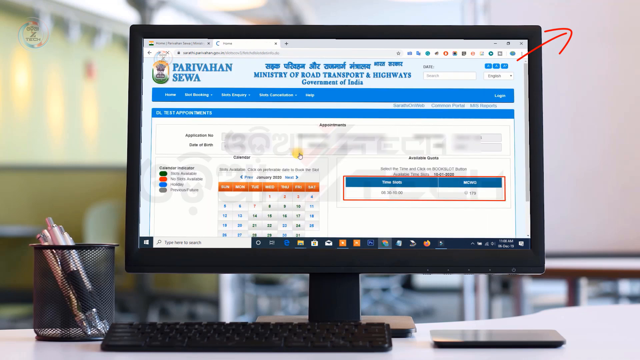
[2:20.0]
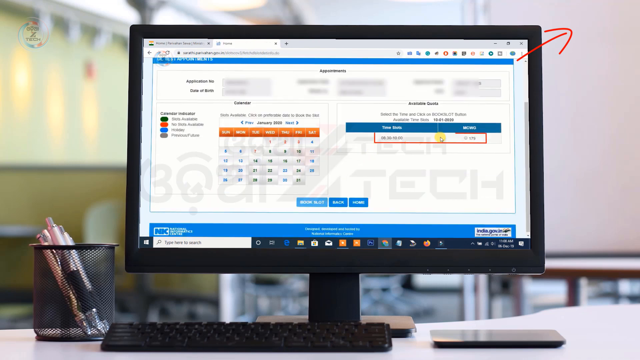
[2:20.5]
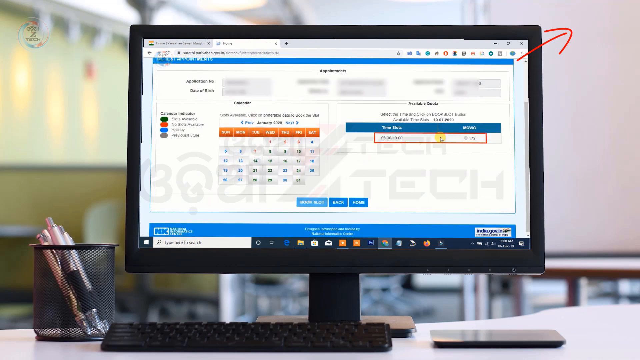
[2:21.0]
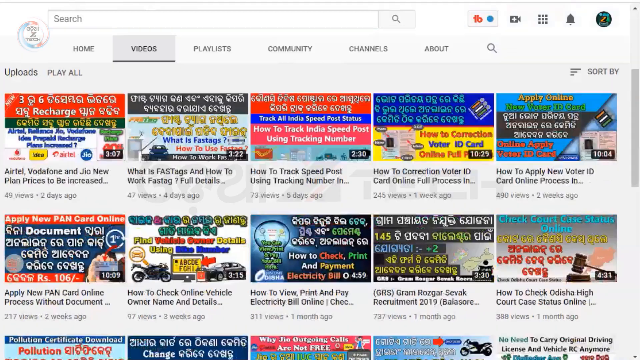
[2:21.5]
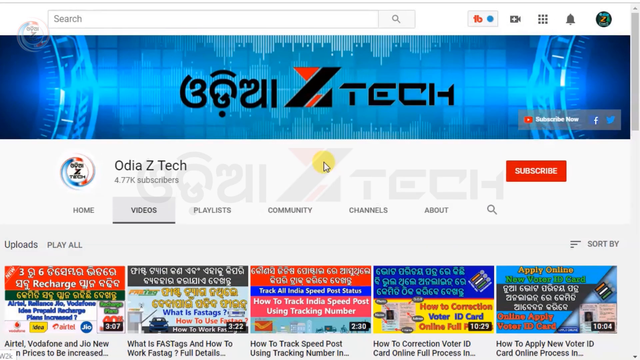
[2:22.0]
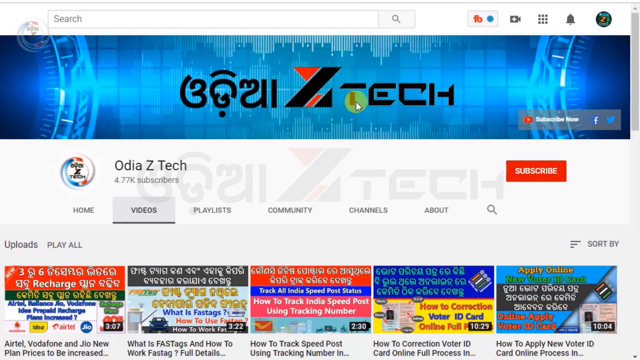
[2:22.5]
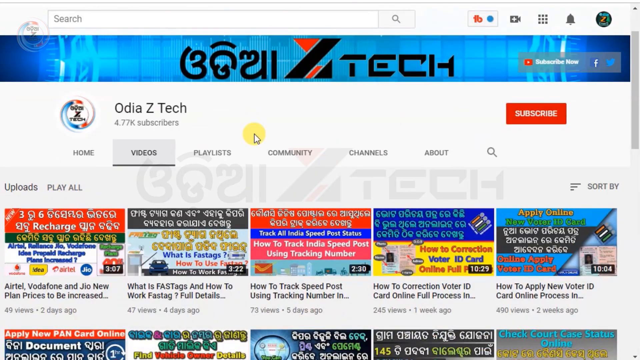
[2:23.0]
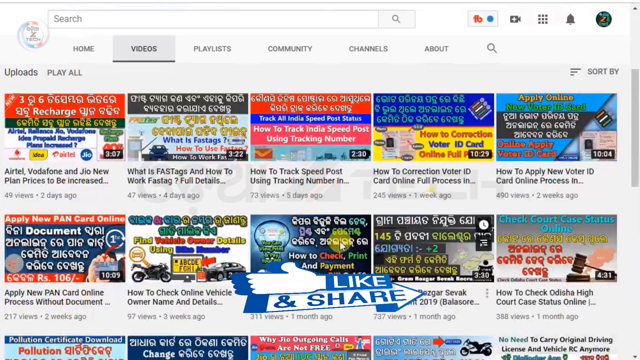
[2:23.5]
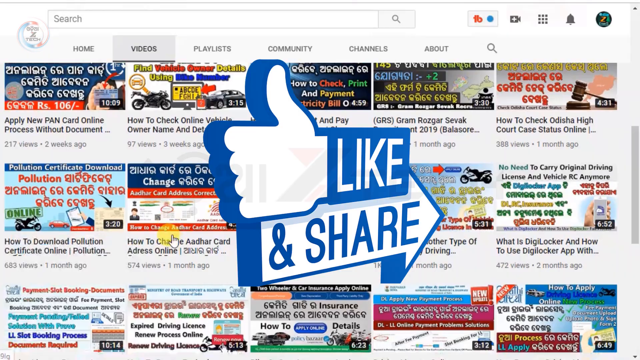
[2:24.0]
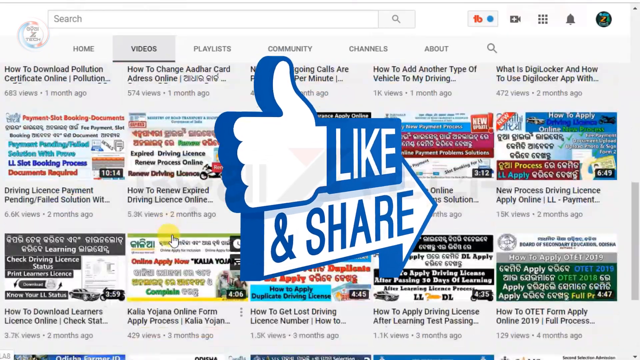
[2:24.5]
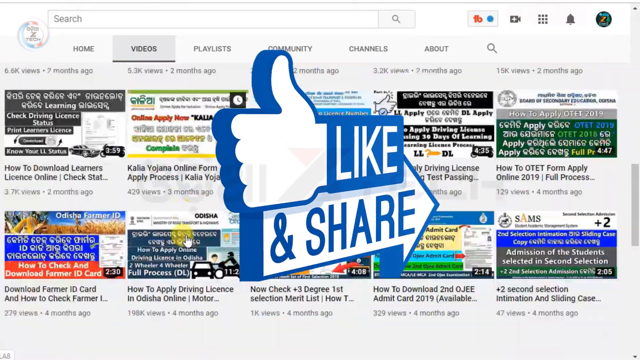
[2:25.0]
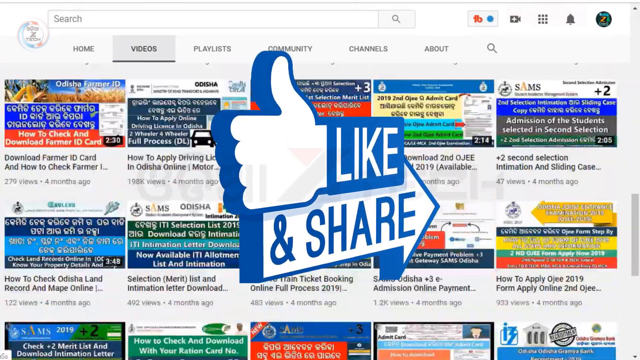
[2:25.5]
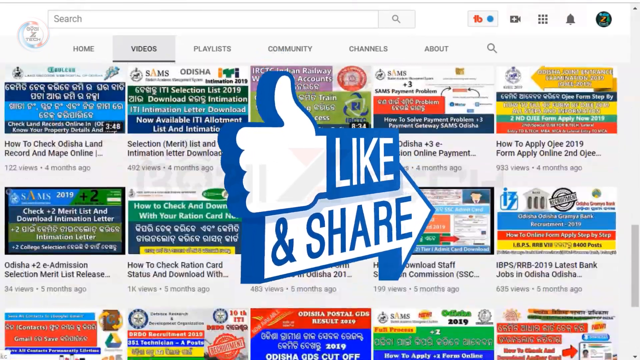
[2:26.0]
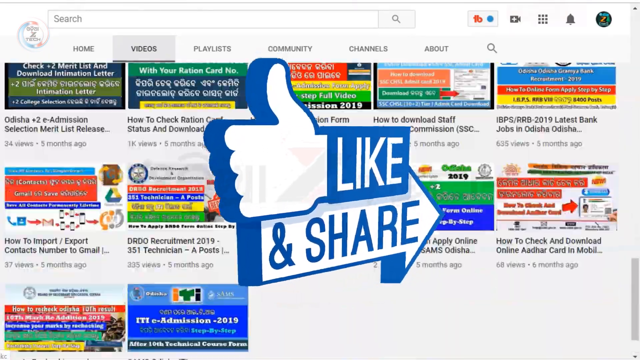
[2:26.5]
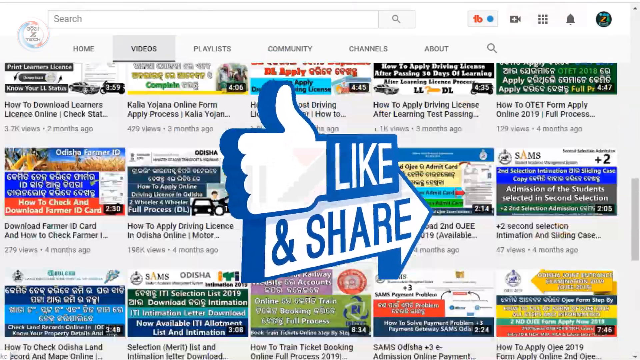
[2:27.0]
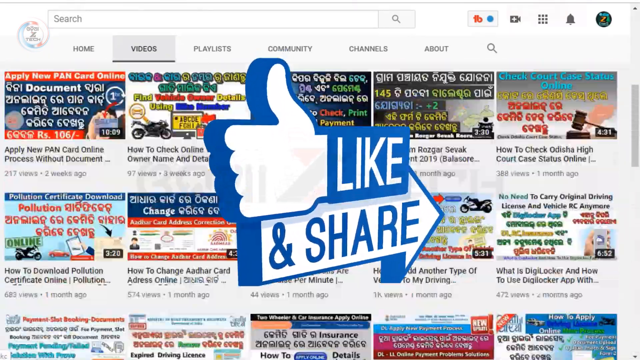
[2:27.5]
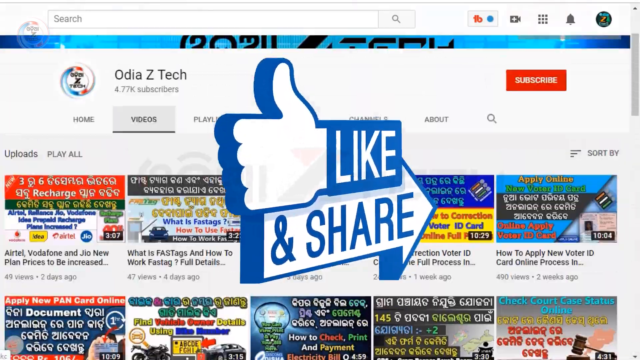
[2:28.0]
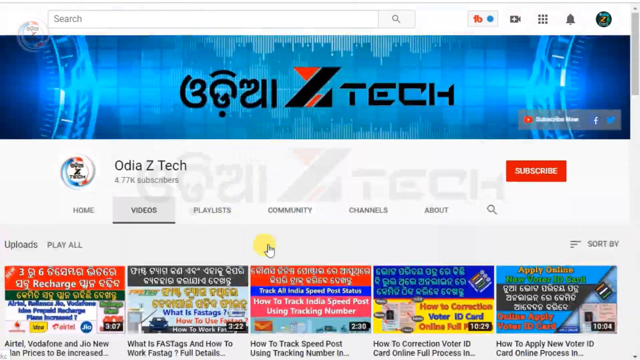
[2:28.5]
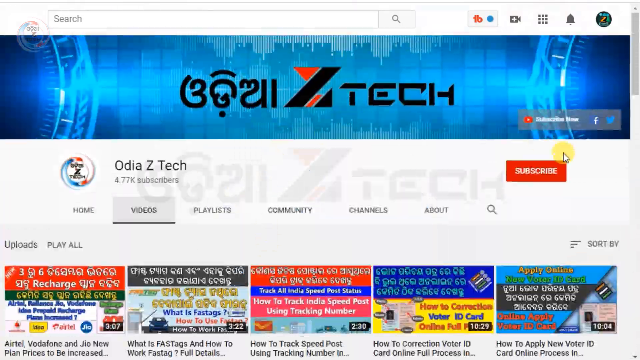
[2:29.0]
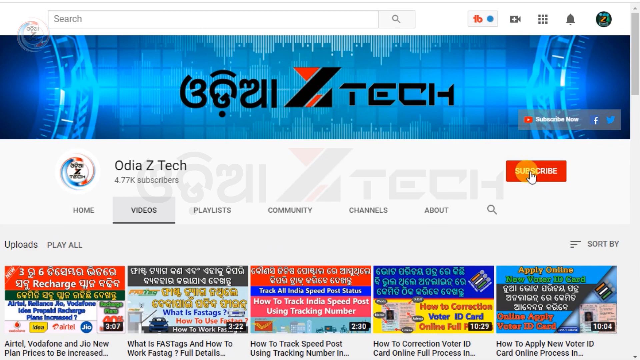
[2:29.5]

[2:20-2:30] The OdiaZTech YouTube channel page appears, and the cursor holds on the video portion of the channel. As it scrolls down, like and share symbols pop up in front of the video. The subscribe button is clicked, and the screen is briefly filled with the channel's numerous videos, very likely well over 30. The thumbnails show a different language, possibly Sanskrit. The channel lists 4.77k subscribers.